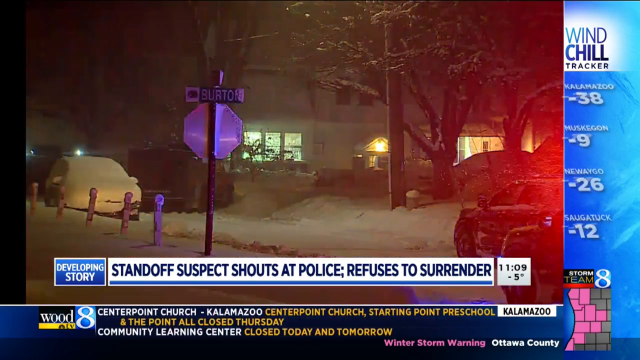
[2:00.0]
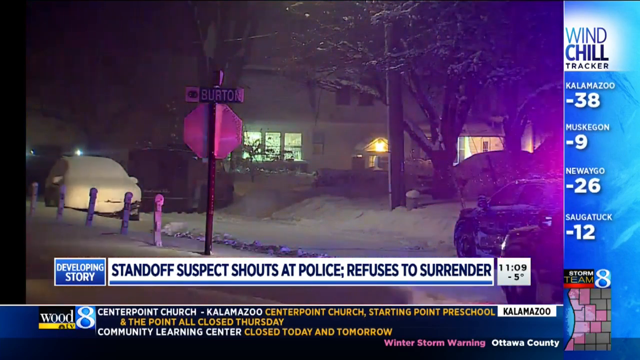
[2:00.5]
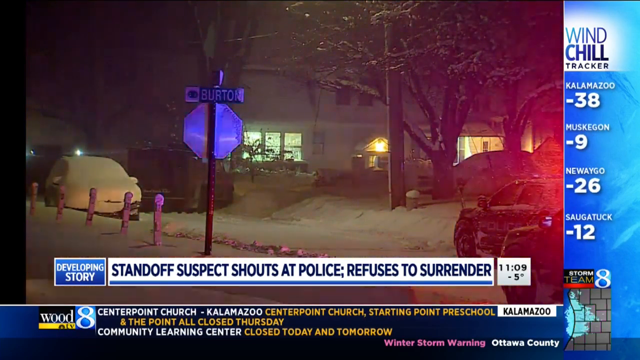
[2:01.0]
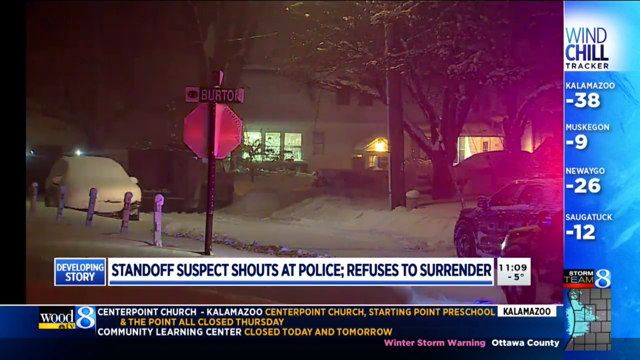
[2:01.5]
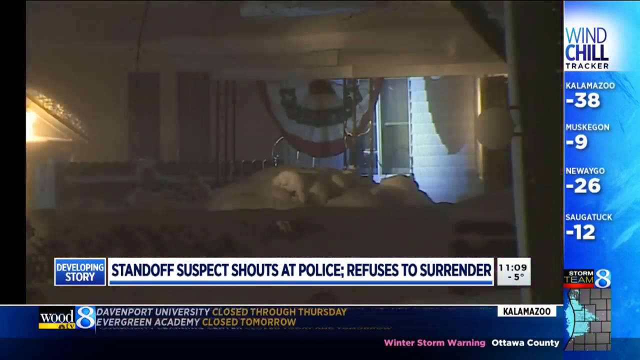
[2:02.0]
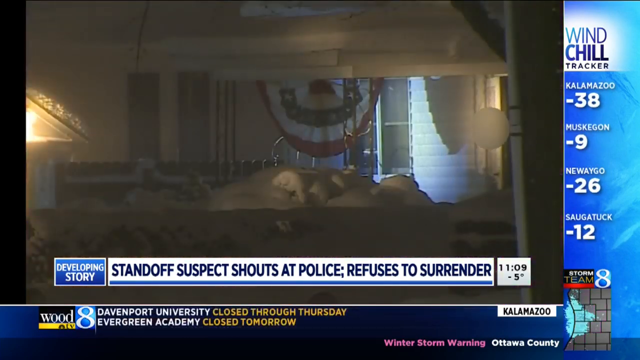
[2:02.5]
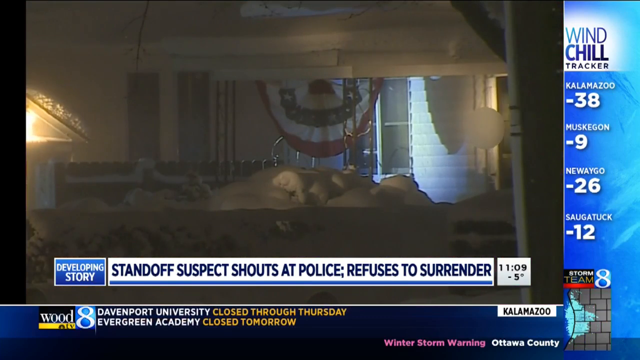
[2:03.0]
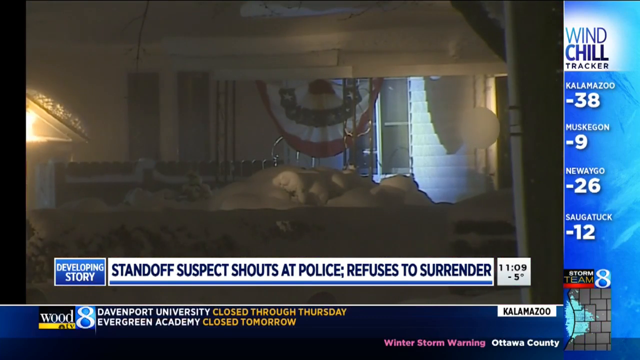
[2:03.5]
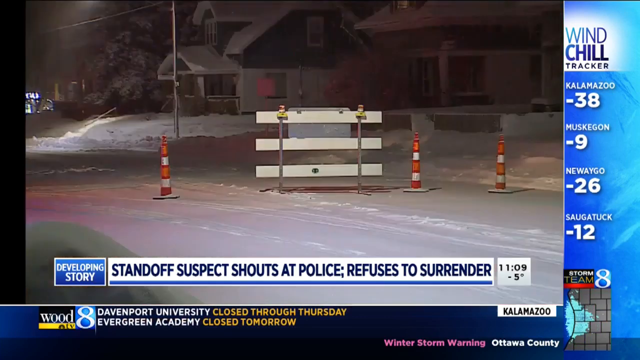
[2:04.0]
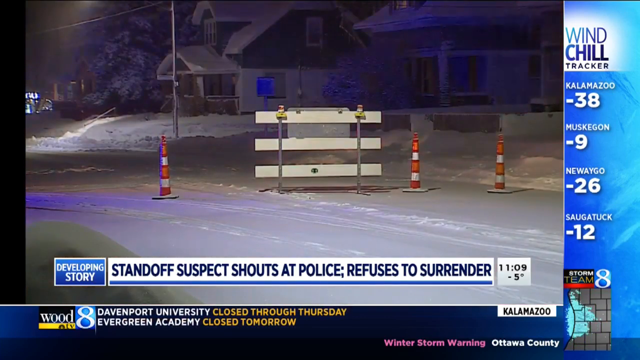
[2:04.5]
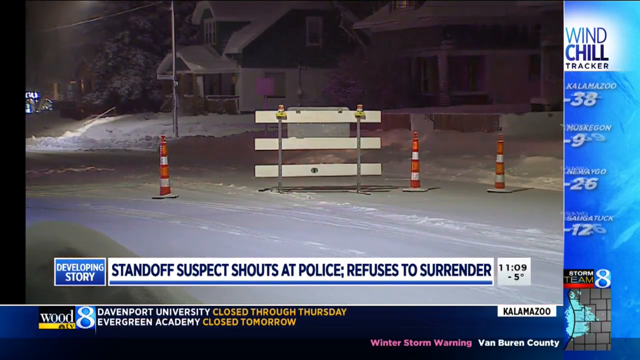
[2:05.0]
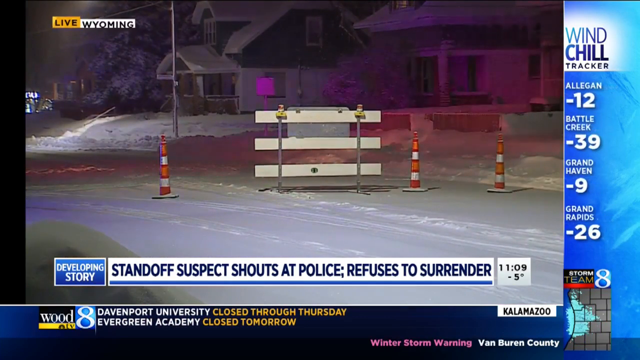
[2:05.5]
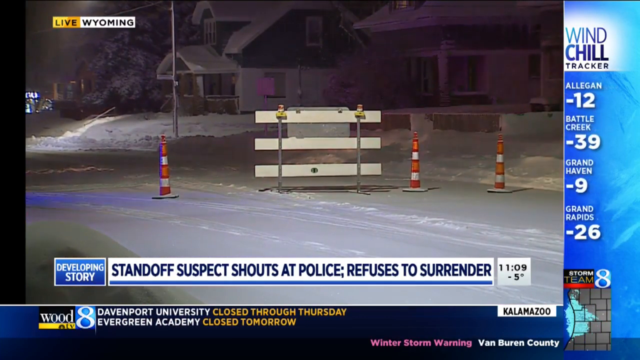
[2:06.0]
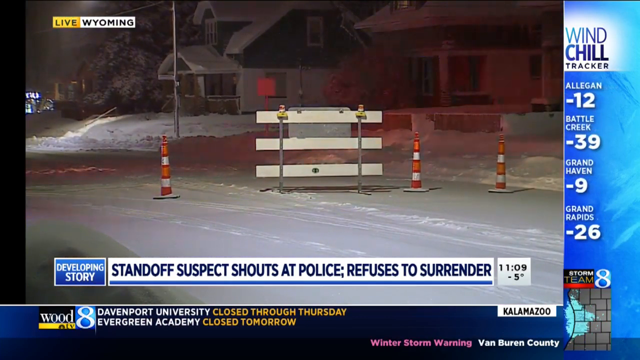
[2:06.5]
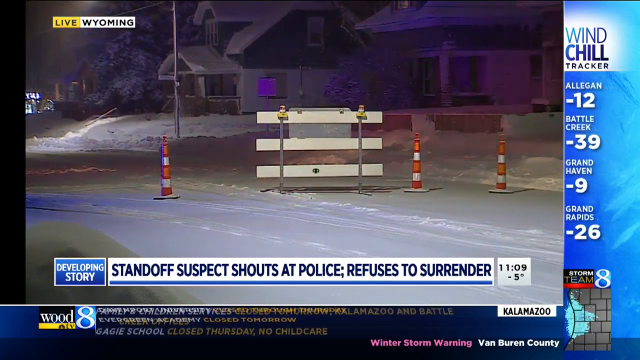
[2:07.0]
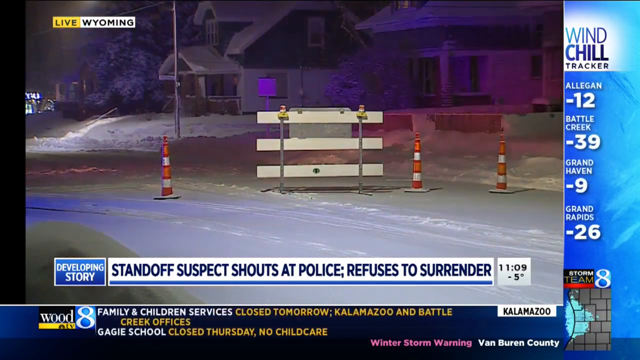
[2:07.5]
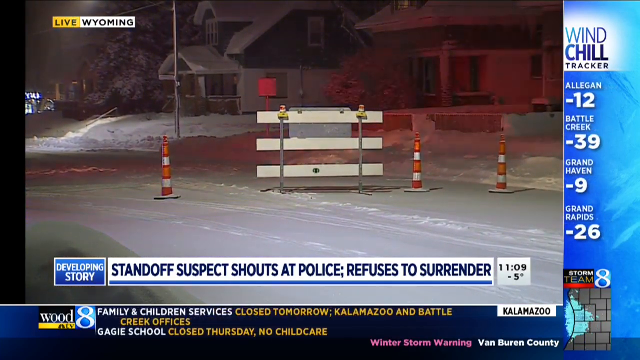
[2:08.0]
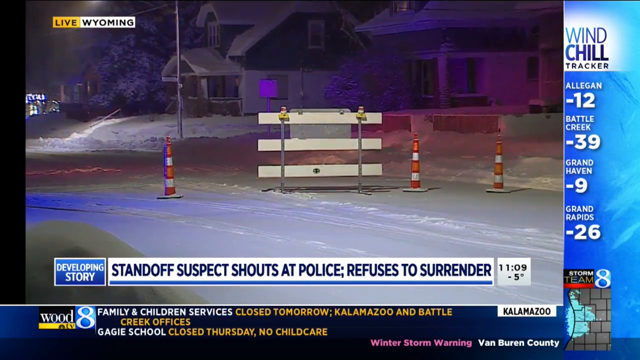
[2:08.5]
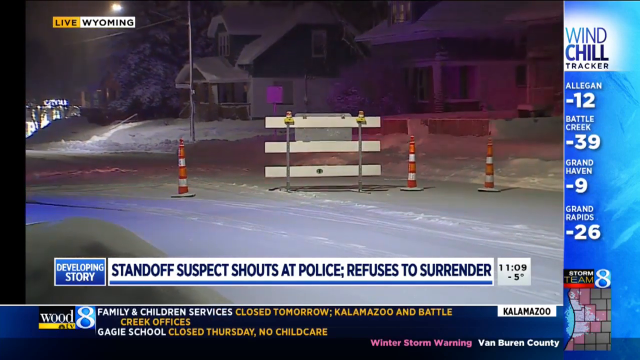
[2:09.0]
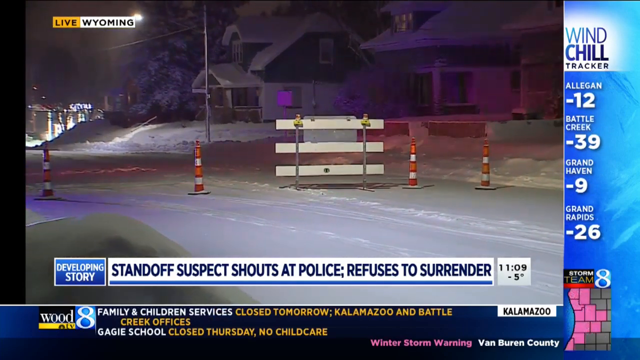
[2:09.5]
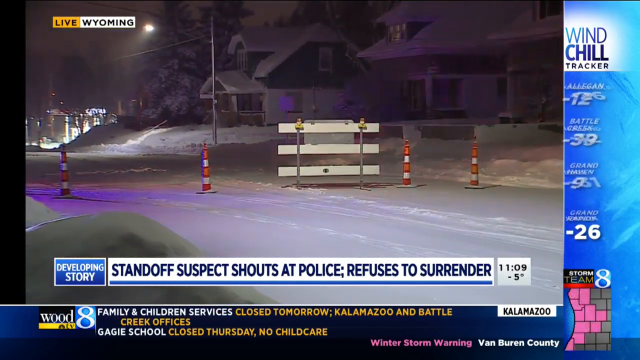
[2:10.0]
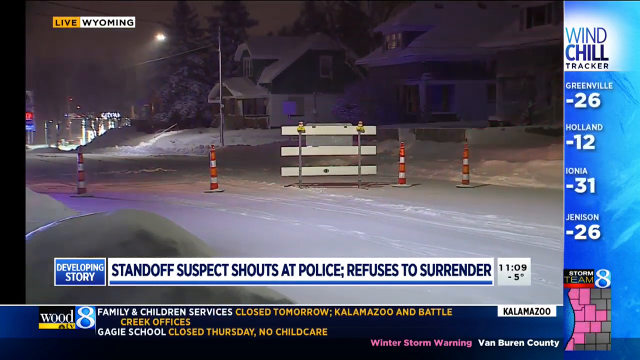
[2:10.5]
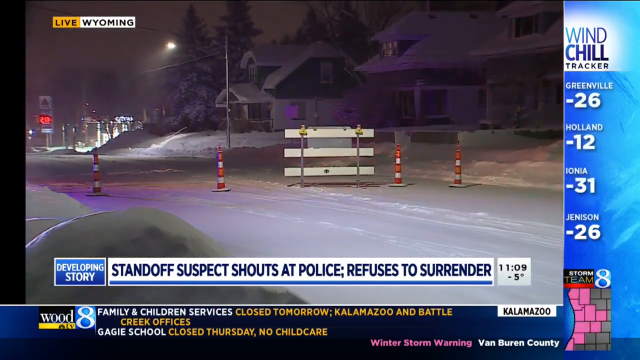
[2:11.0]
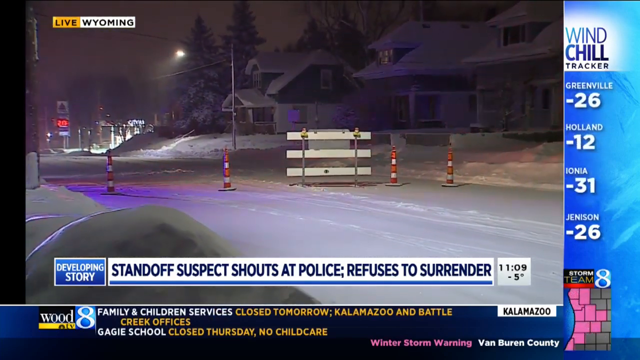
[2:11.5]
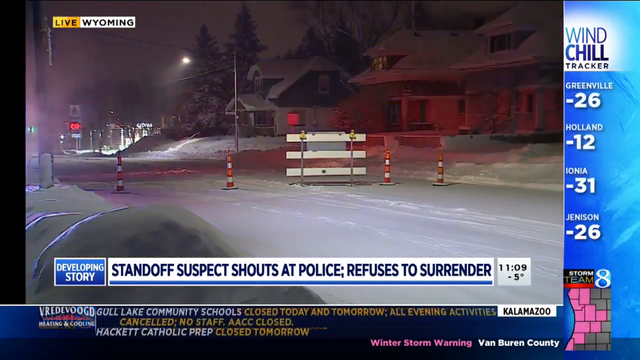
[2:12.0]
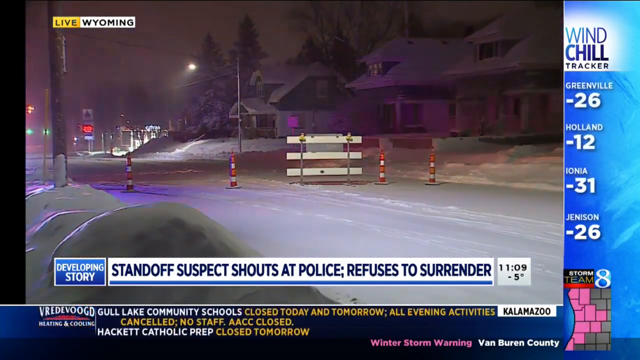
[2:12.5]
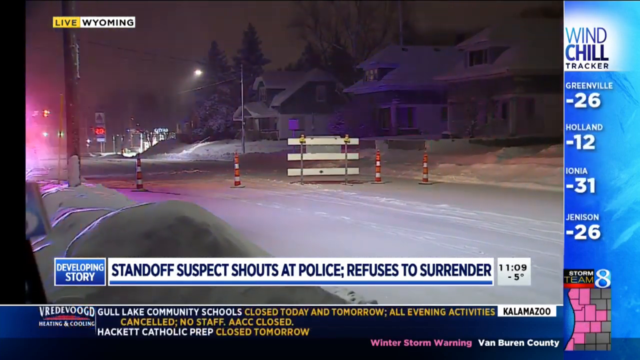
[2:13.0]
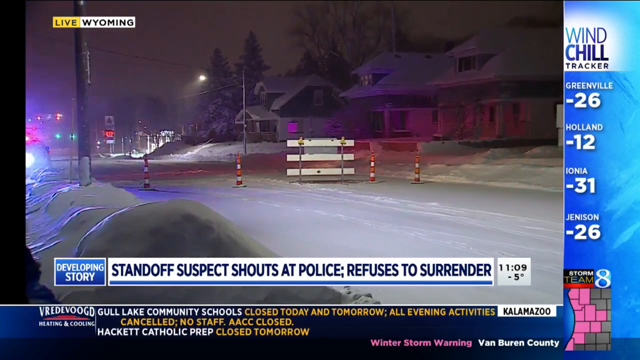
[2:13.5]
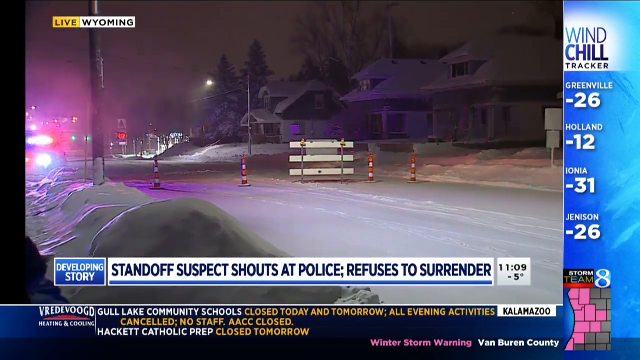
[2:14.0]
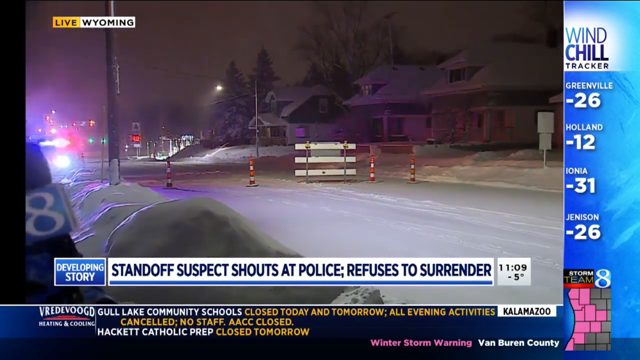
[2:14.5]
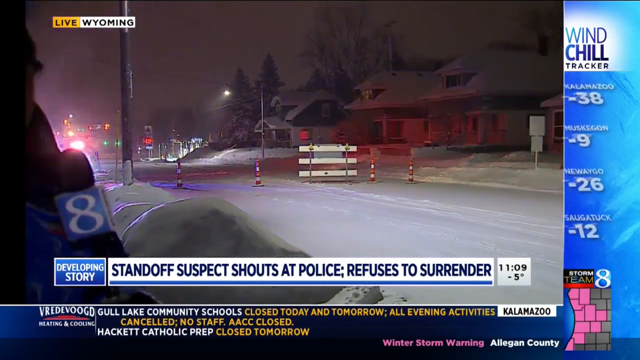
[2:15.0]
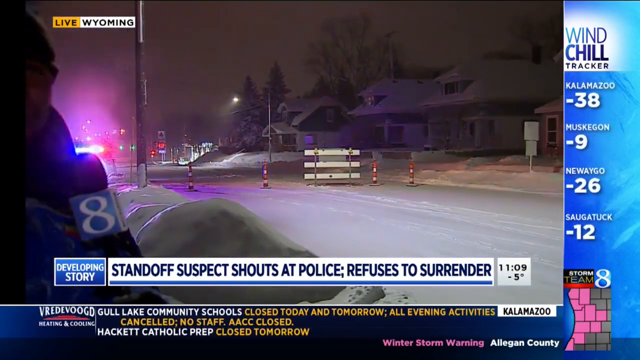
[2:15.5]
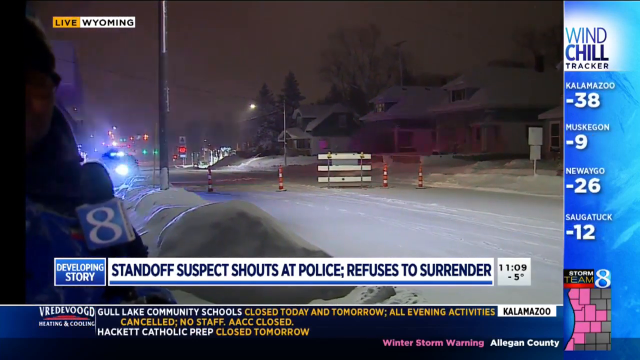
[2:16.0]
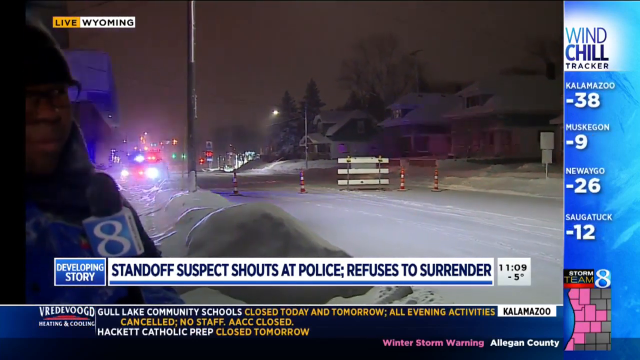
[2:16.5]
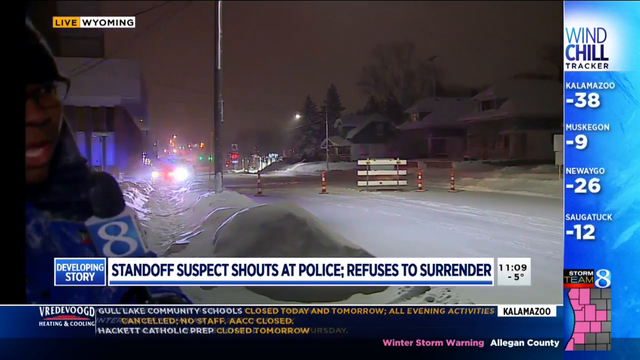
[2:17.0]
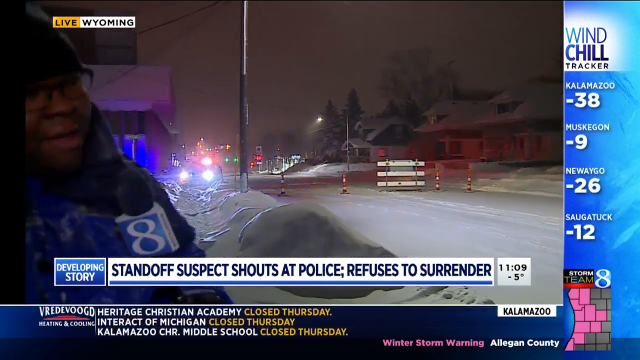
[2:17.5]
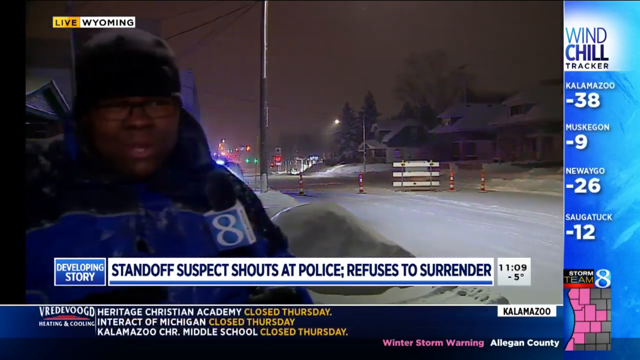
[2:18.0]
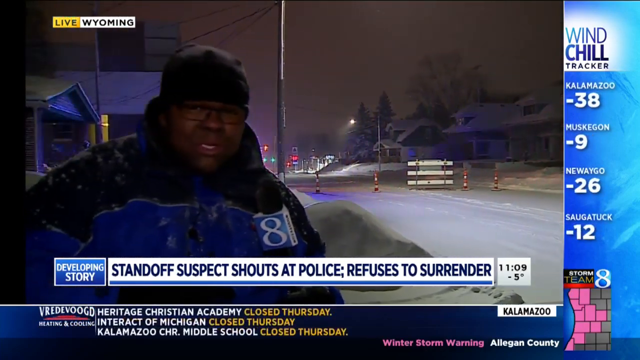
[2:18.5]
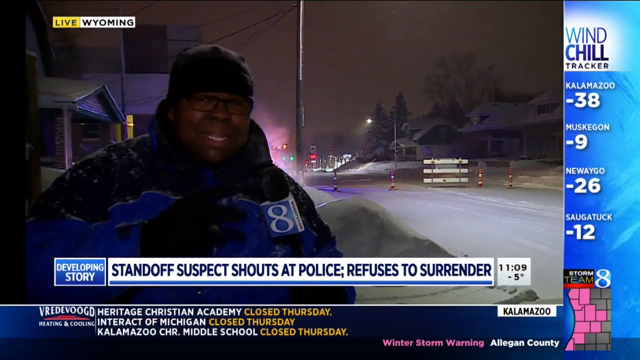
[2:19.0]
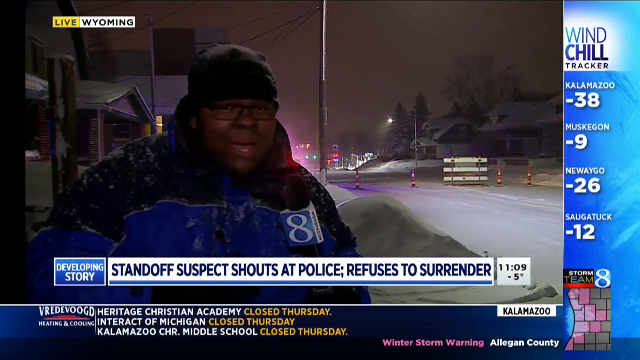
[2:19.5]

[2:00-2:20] The man appears very briefly, coming out of where he was. The camera then shows a long shot of the neighborhood, with other houses and their rooftops covered in snow. Further back, the moon is out over the trees, shining bright. In the distance, unclear, there is possibly a gas station, with a marquee that has red in the middle. The residential street is wide, and traffic cones block it off. "Wyoming" appears in the top left corner, while a Michigan map is at the bottom of the screen and Michigan towns appear in the wind chill tracker; Wyoming is apparently a town in Michigan. A street pole is on the left side, and police lights keep flashing. The shot then turns back to the correspondent.